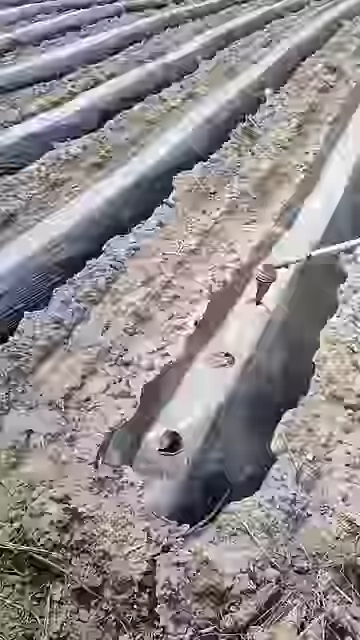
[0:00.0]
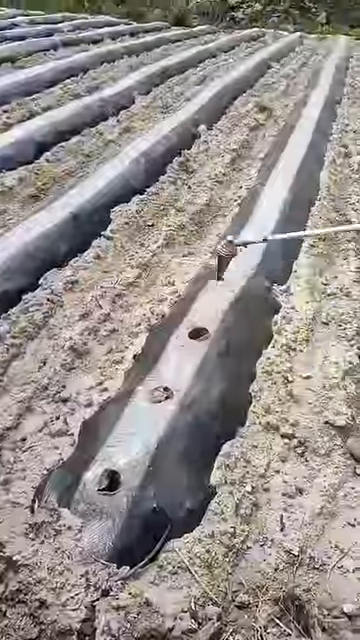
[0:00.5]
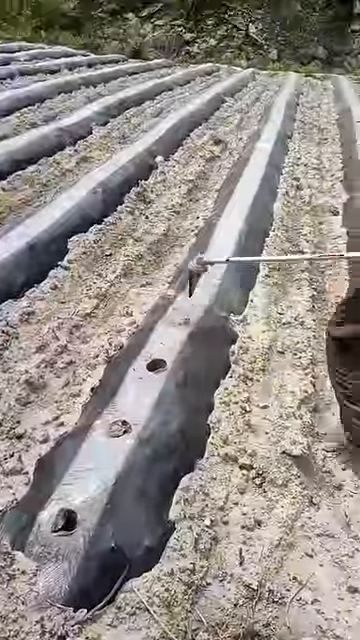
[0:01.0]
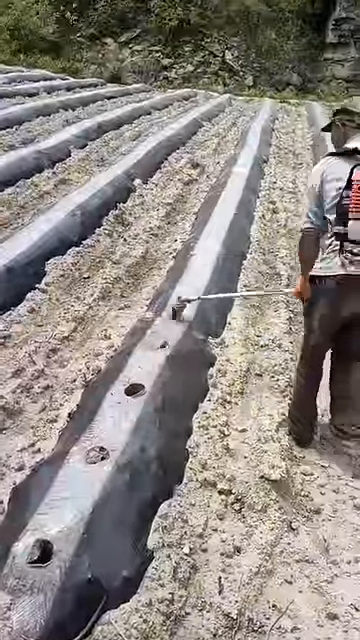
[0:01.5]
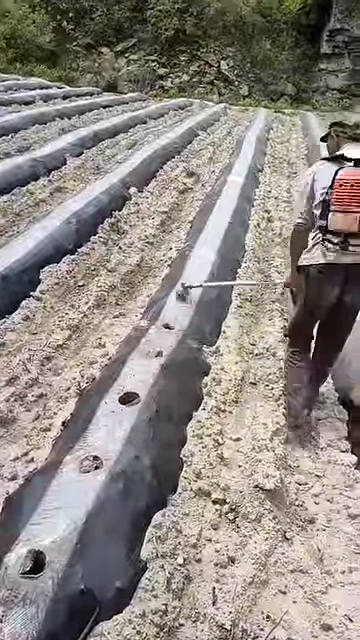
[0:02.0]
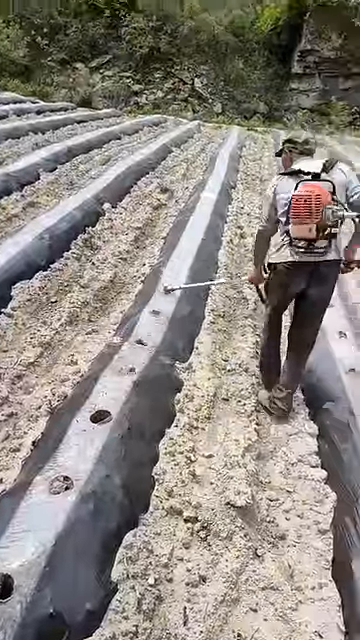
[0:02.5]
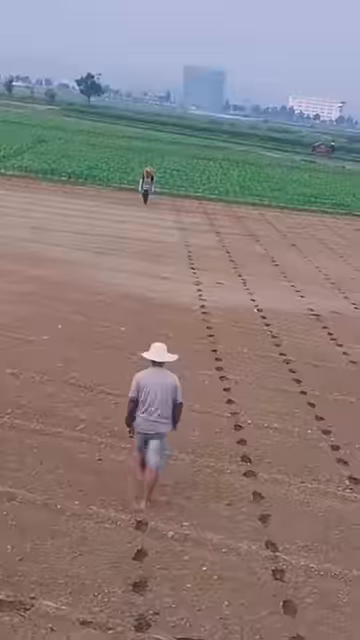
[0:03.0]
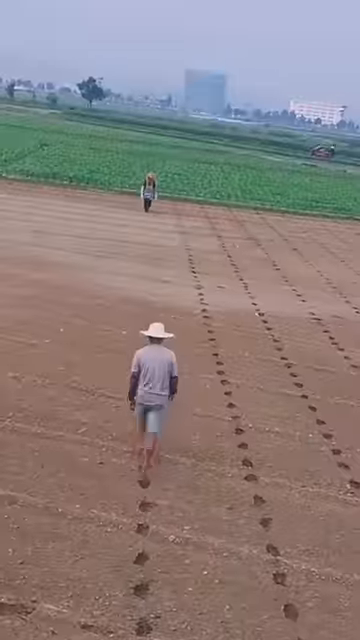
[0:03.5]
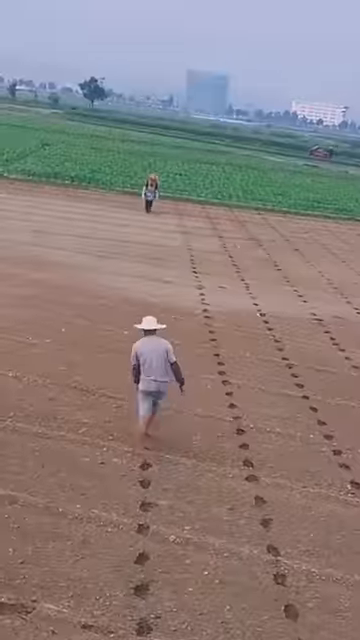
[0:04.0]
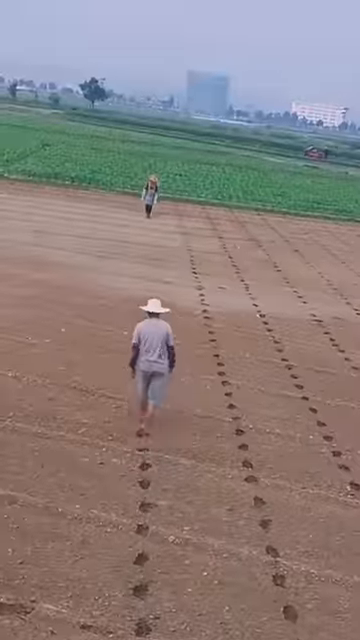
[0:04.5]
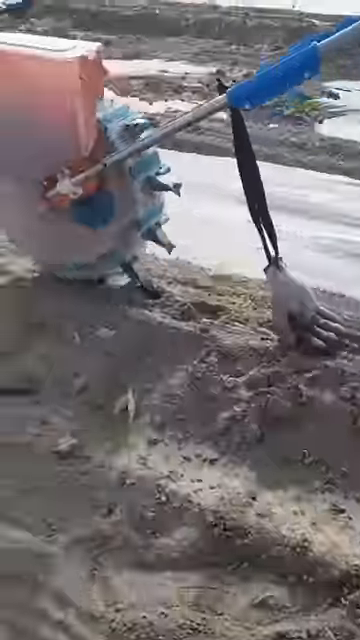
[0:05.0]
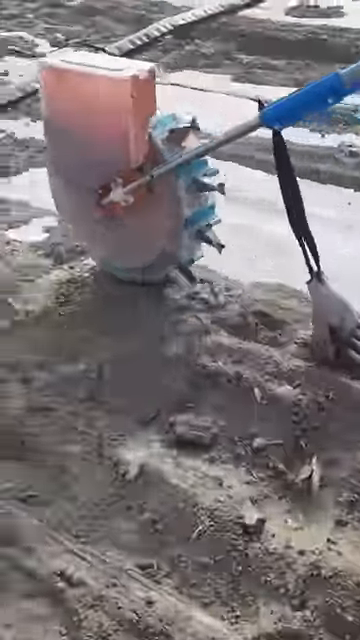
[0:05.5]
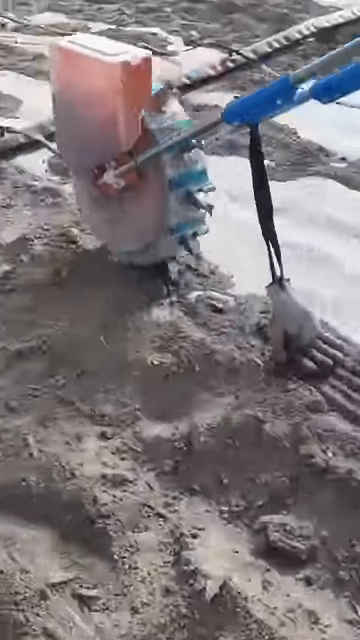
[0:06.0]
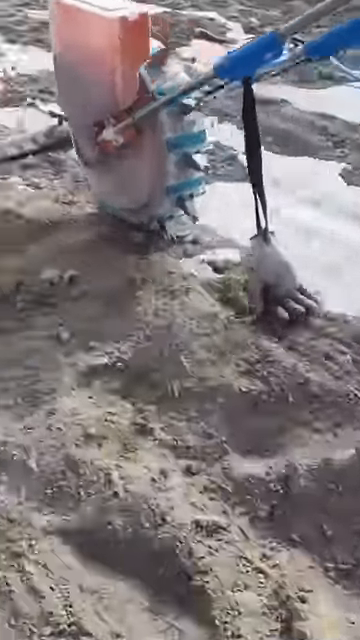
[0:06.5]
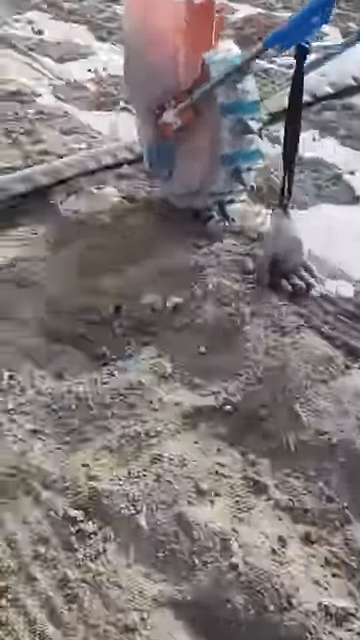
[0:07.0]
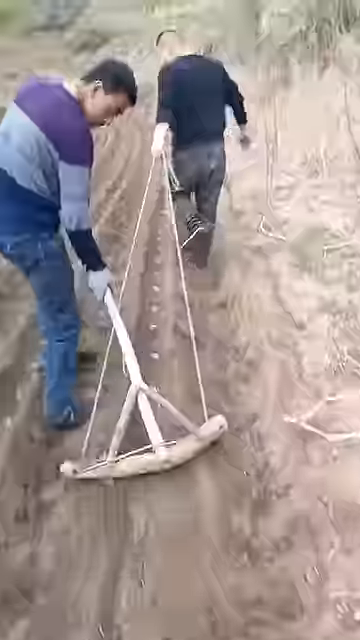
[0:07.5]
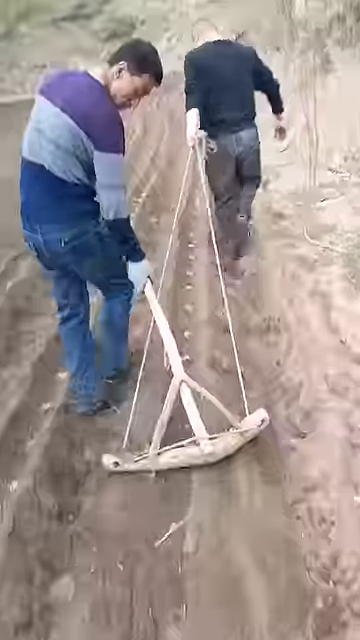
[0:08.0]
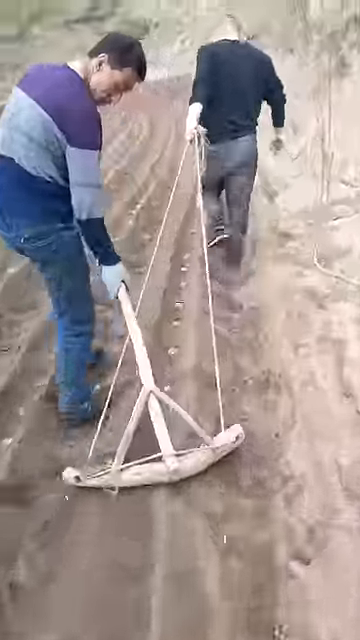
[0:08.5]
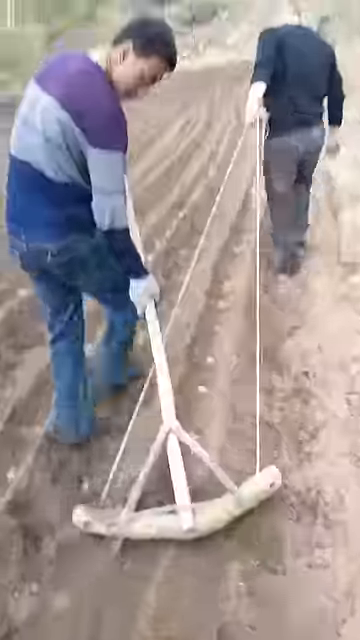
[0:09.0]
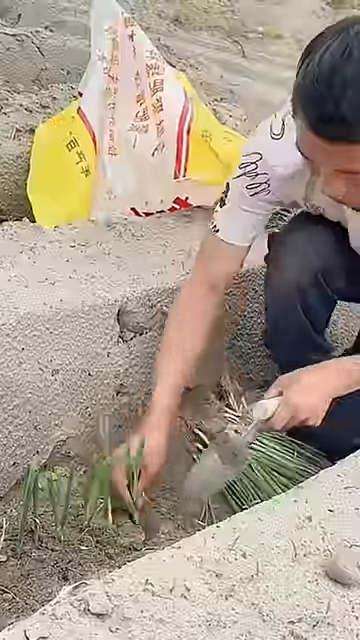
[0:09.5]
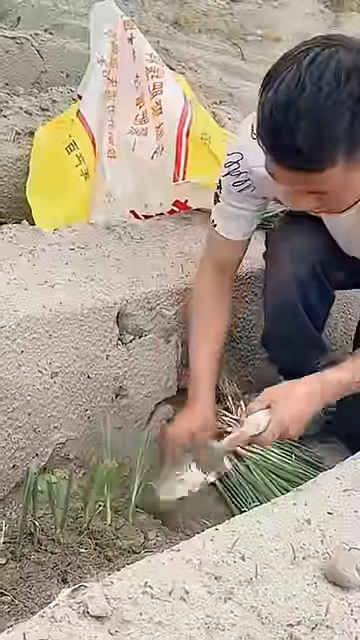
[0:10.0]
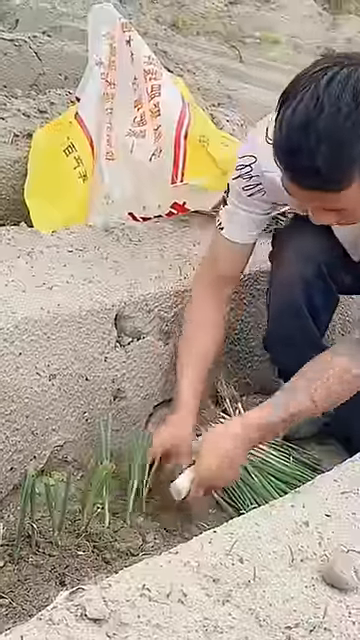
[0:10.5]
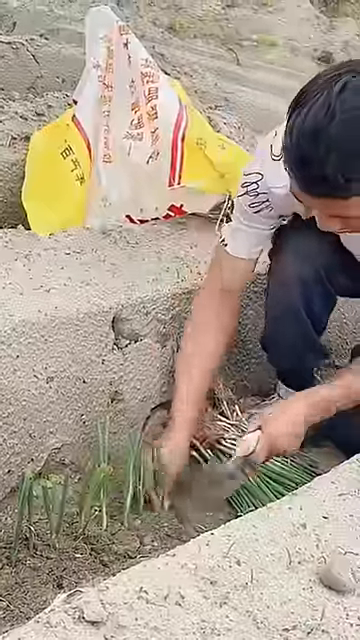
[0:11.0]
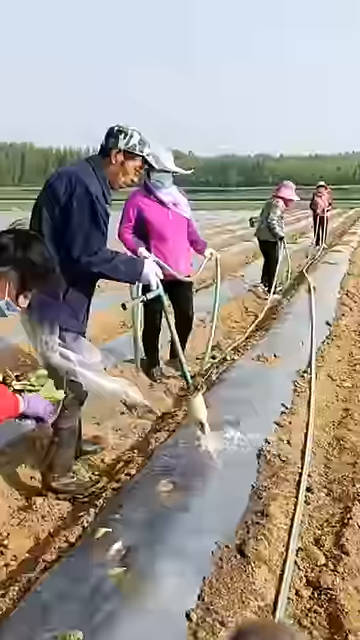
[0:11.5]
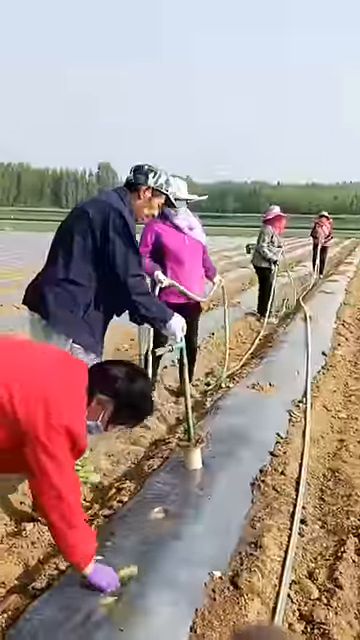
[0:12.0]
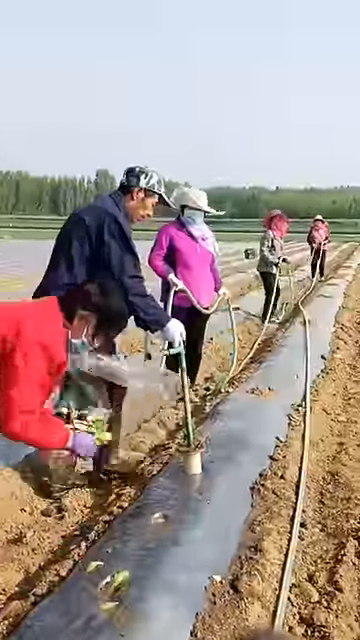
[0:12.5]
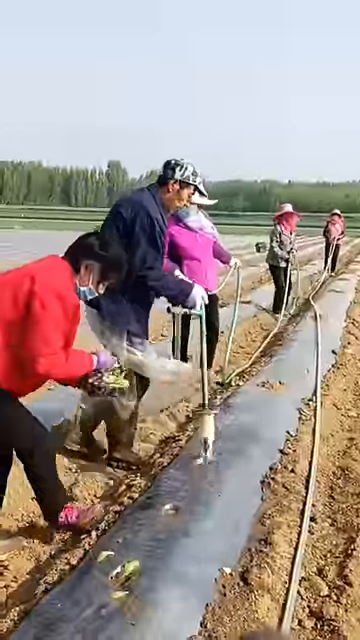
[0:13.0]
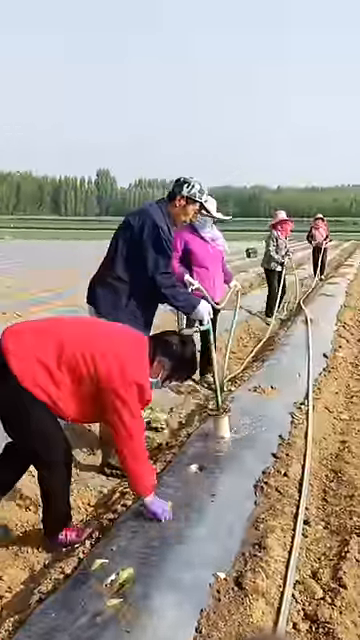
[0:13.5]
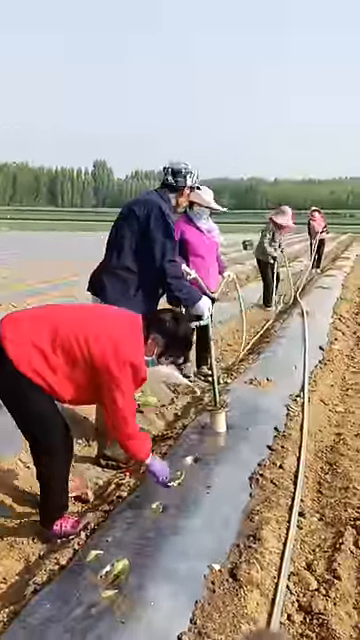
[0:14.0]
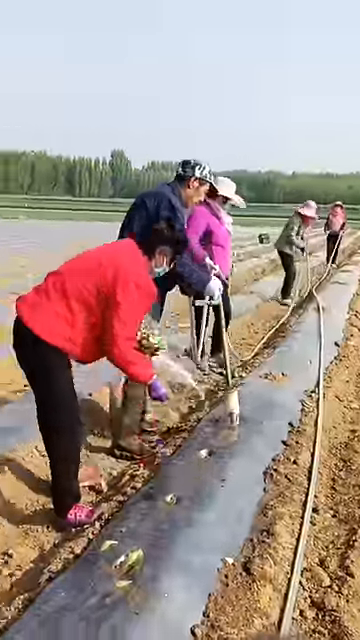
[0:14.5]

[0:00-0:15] The video is titled The Very Creative Farmer. It shows a picture of a man farming with a tool; he goes down one lane, pounding and pounding. Clips of other people farming follow. After the man makes the holes with his cane, a field appears, where a man is making footsteps so that flowers or plants can be planted in them. Two people farm with a tool they pull behind them, digging up the dirt. Someone uses a rotational tool, pushing it so that it turns and makes holes to plant the crops. A picture shows a man on his hands and knees hand planting crops, and the green crops he is planting are visible. Finally, a picture shows a group of people working together: one of them makes the holes, and the person behind plants whatever they are going to grow into the hole that was just made.